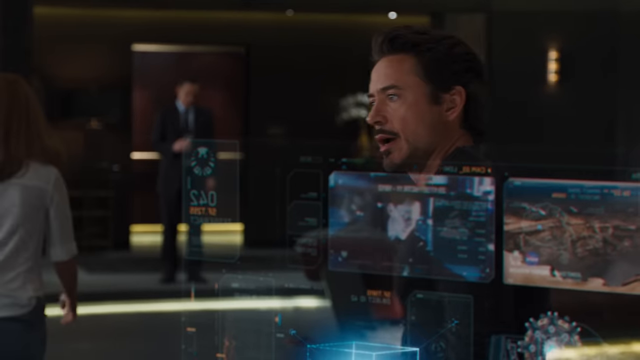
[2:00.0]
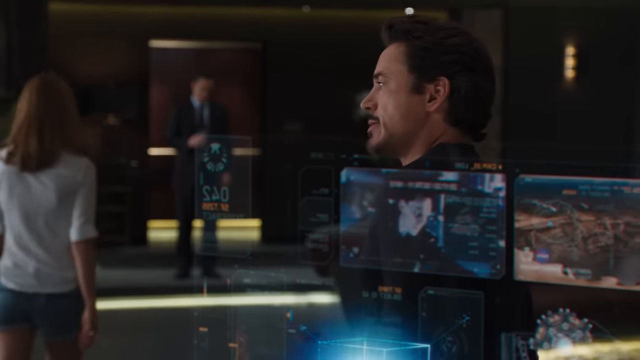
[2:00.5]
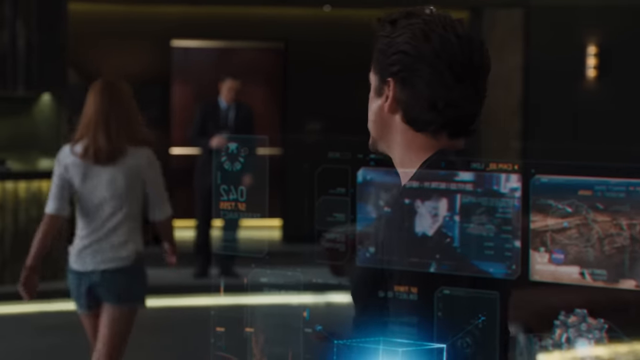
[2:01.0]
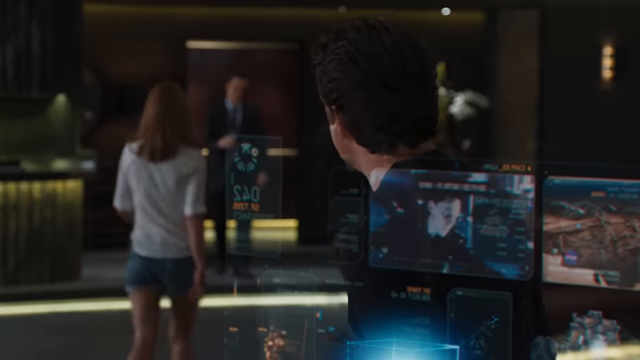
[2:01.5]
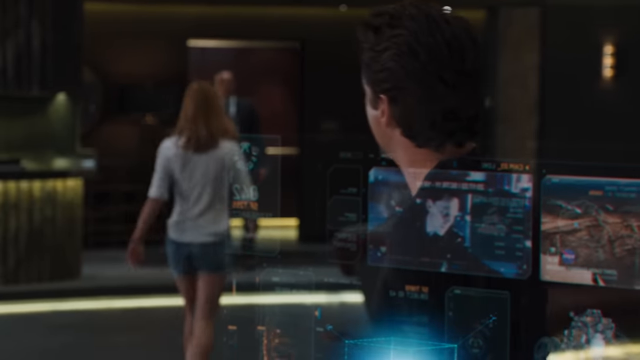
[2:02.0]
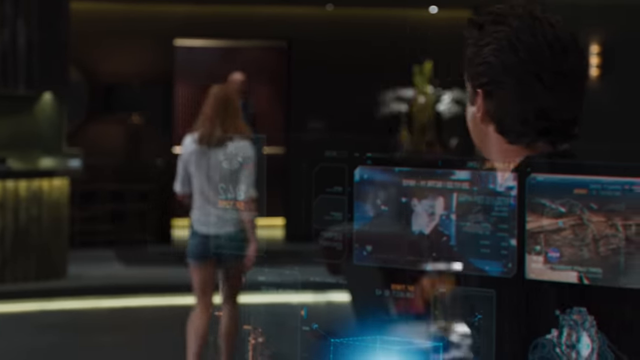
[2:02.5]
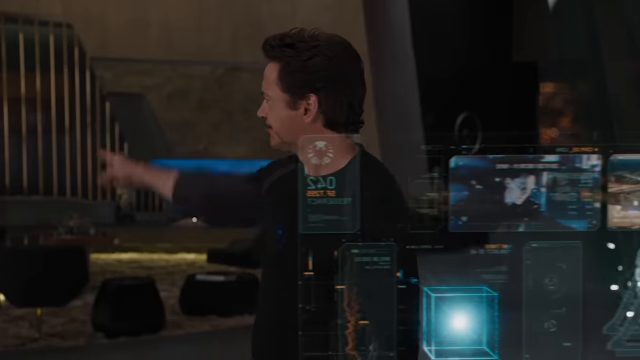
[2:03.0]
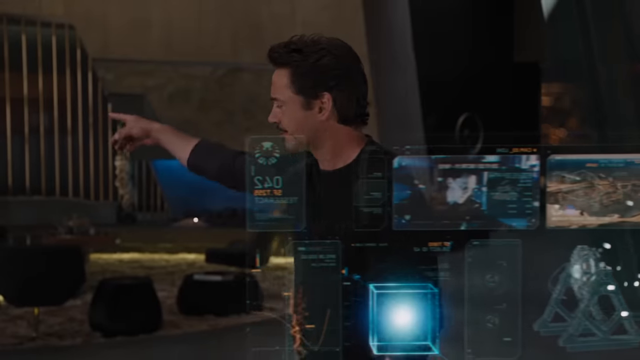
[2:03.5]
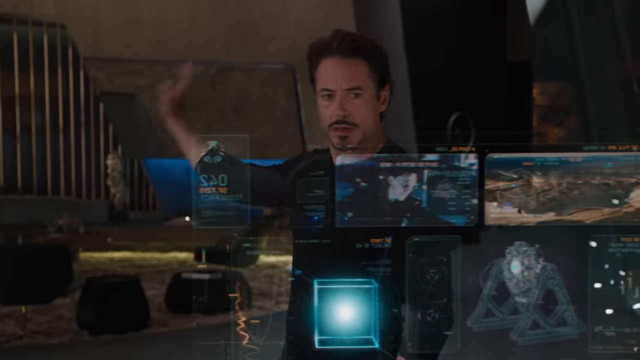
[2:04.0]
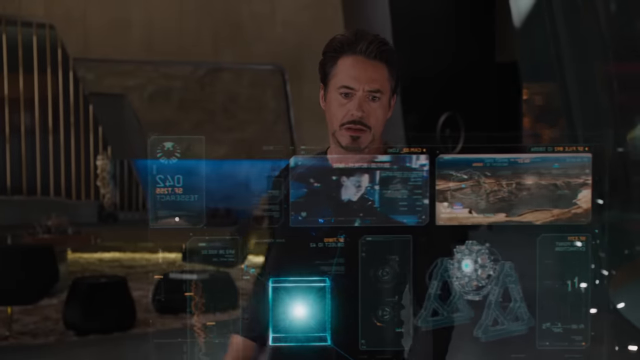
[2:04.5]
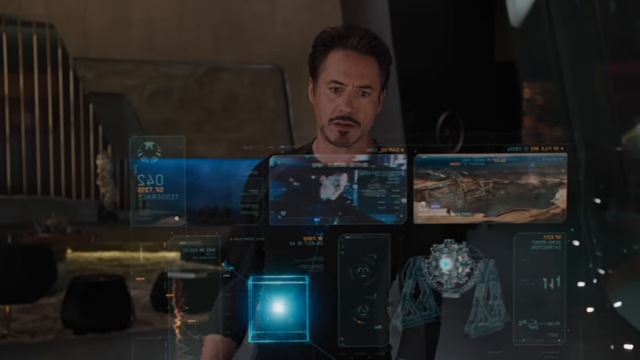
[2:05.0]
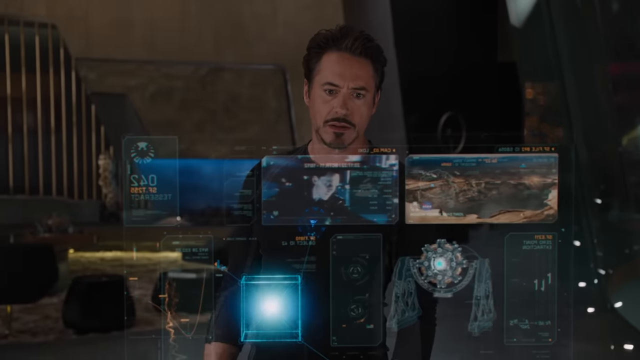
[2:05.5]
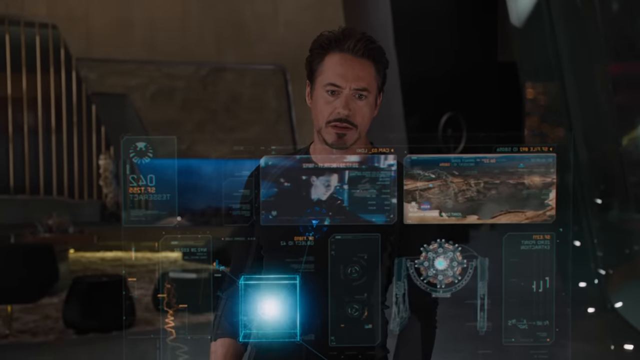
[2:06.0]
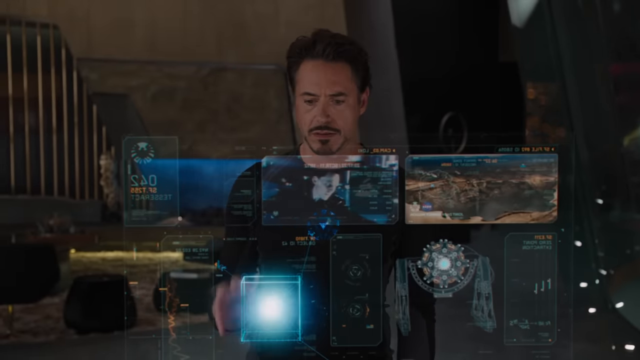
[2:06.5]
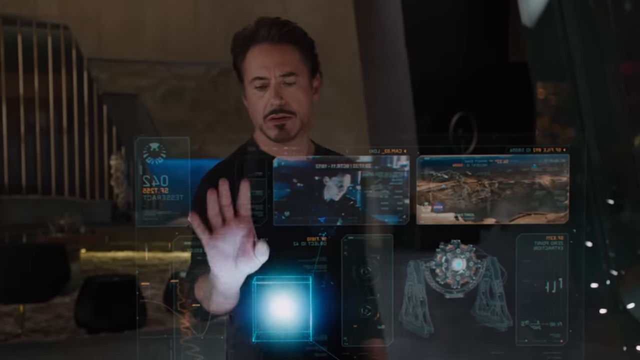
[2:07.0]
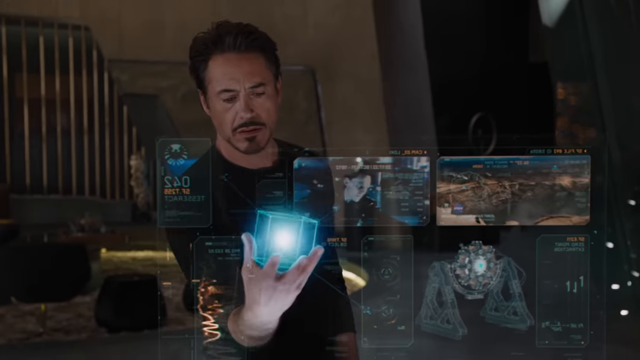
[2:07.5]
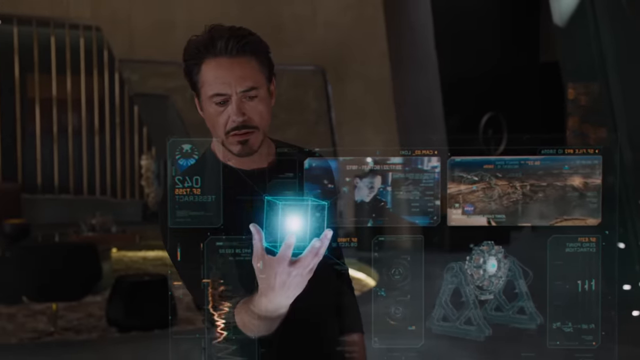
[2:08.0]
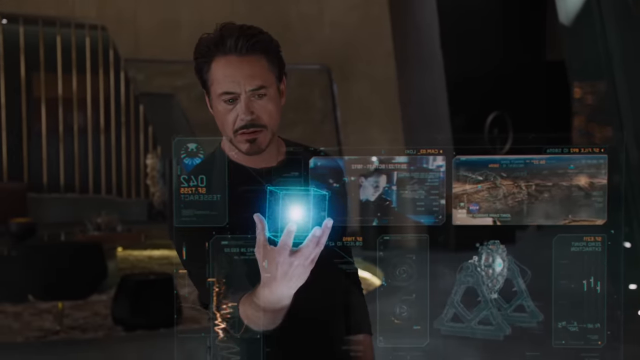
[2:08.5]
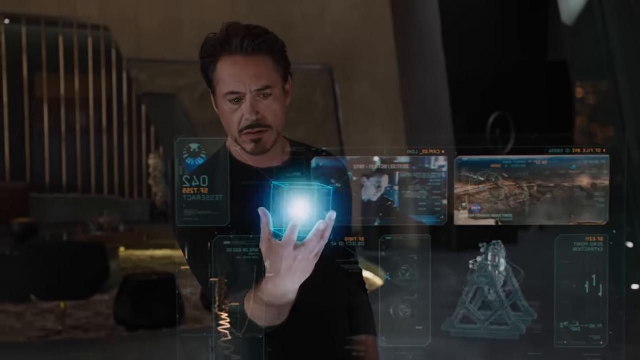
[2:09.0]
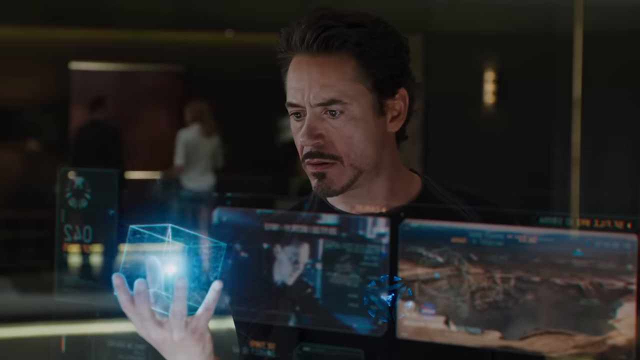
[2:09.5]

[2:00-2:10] Robert Downey Jr., in his mid-50s with dark hair, dark eyes and a black mustache and goatee, is in the movie with his co-star, who is in her mid-40s with red hair, green eyes and a medium complexion, wearing a white top and blue jean shorts. Robert looks at the different screens he can touch. He picks up a cube object that comes off the screen into his hand; it has a light in the middle of it.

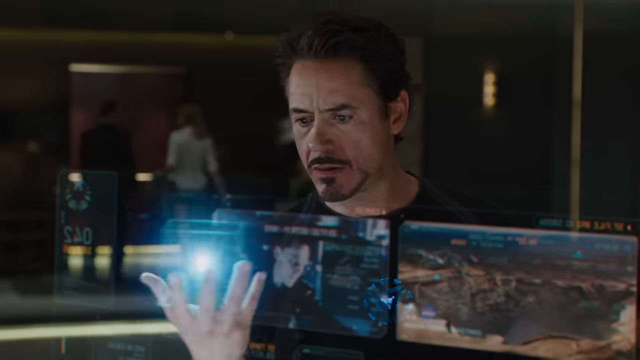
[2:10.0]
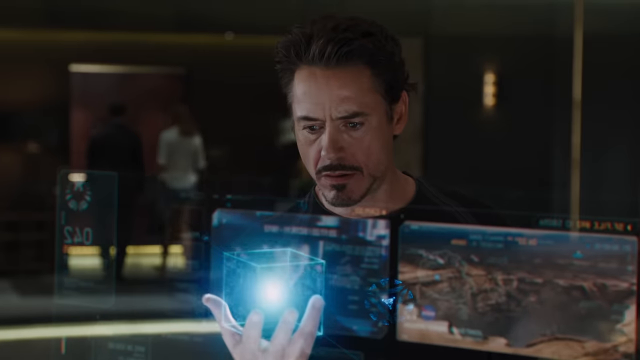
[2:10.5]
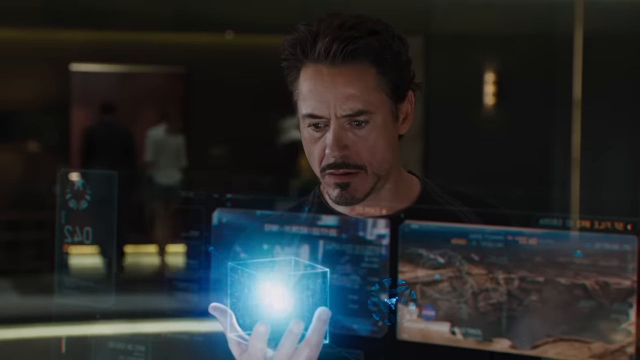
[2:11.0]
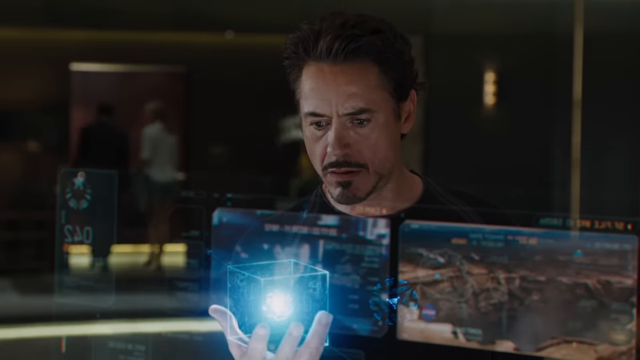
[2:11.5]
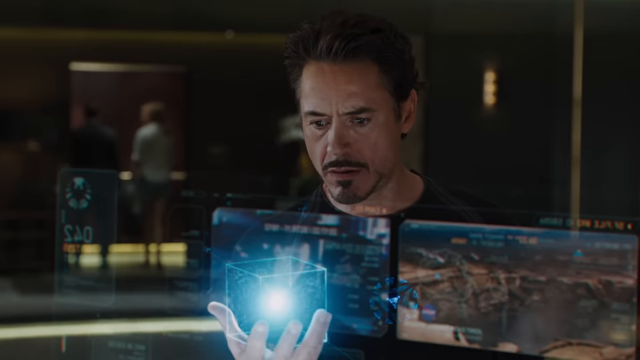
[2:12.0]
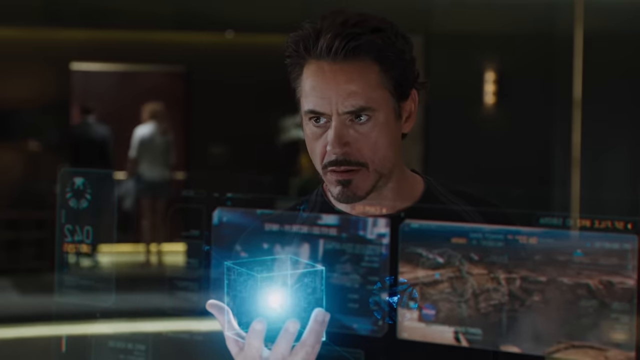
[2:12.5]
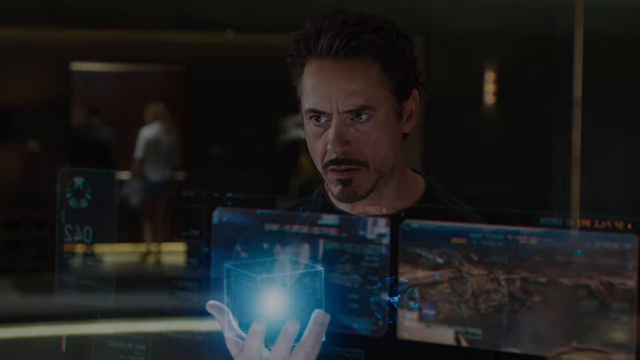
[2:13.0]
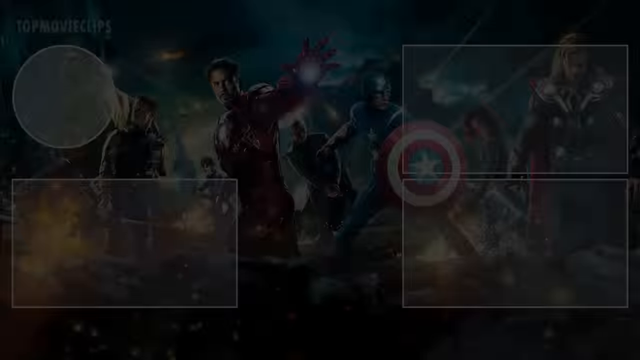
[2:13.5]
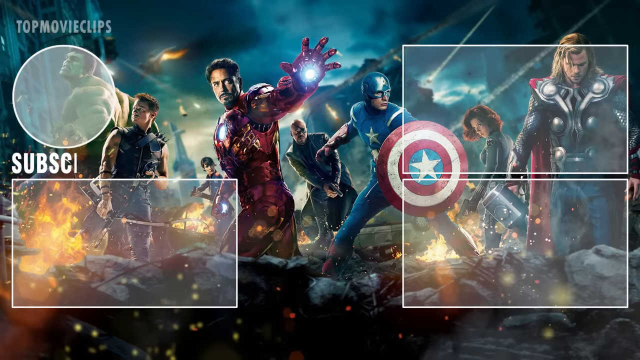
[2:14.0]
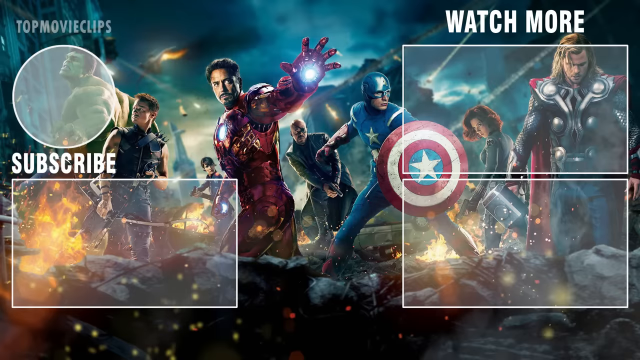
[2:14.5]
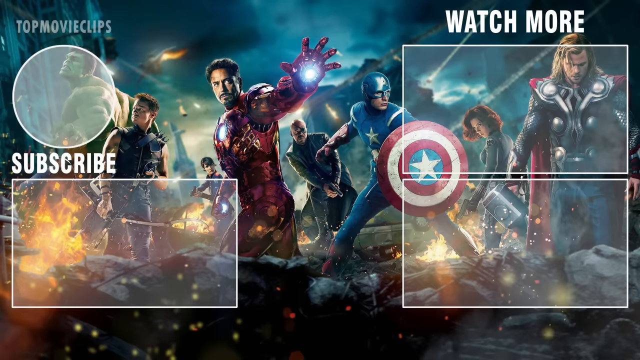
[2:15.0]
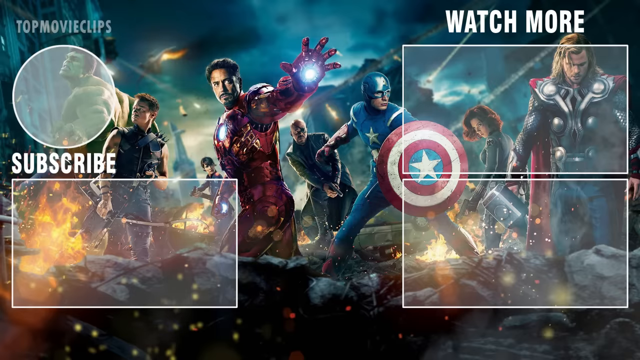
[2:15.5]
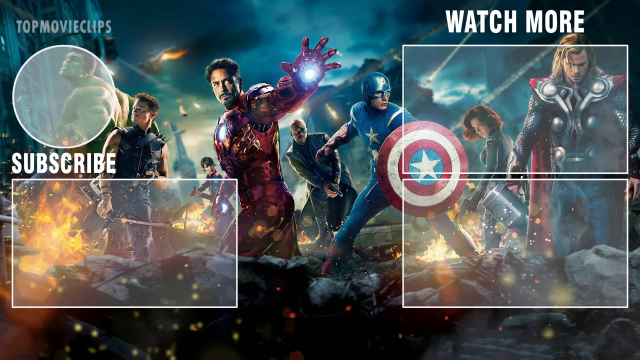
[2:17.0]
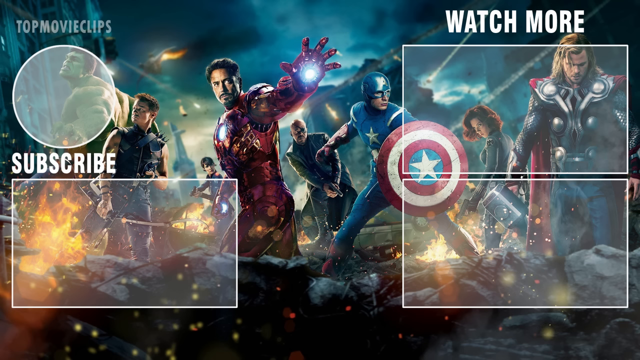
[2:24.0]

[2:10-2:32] Robert Downey Jr., in his mid-50s with dark hair, dark eyes and a dark mustache and goatee, is at a translucent screen with a cube-like object in his hand. He turns it around; it has a green color and a bright circular light inside. The movie scene then ends, and superheroes such as Captain America, Iron Man and Hulk, along with other Marvel comic characters, appear; the movie apparently is Iron Man. At the top left is the text "top movie clips", at the top right "watch more", and at the middle left "subscribe".